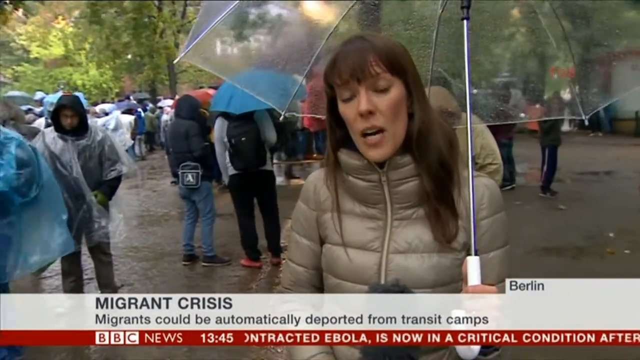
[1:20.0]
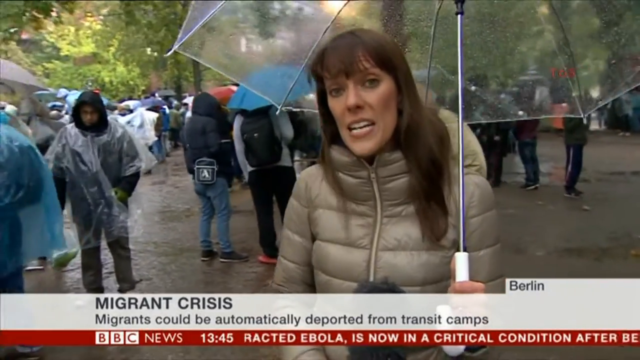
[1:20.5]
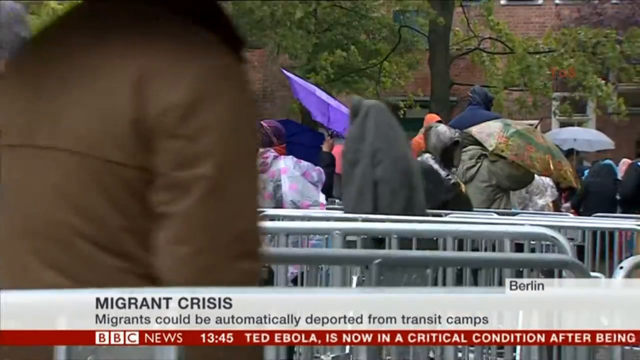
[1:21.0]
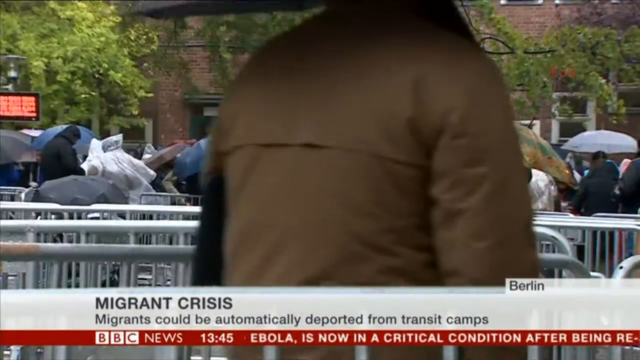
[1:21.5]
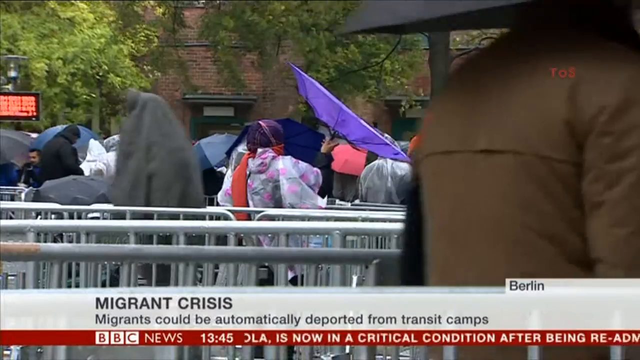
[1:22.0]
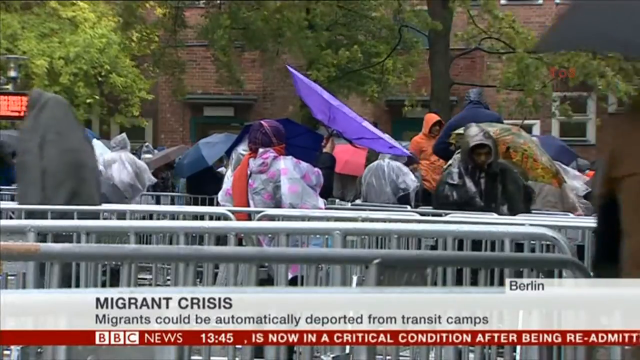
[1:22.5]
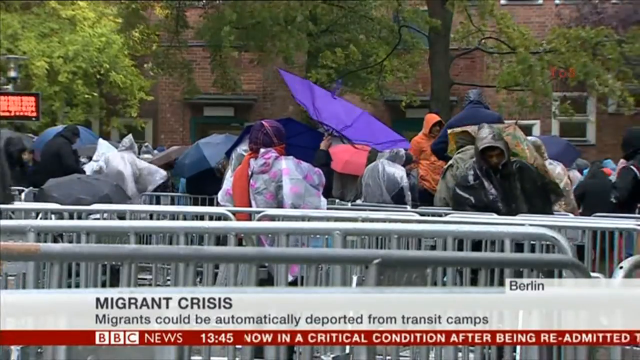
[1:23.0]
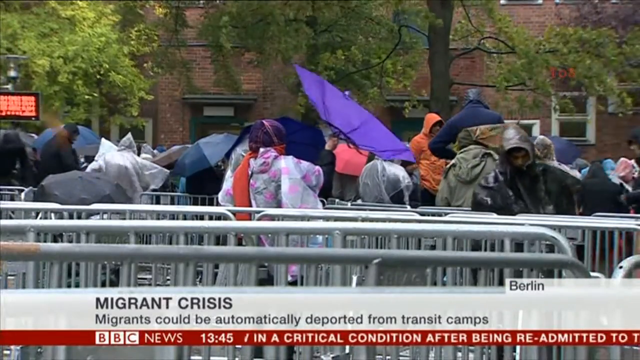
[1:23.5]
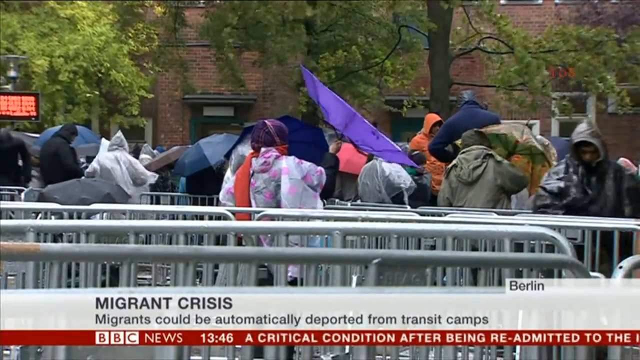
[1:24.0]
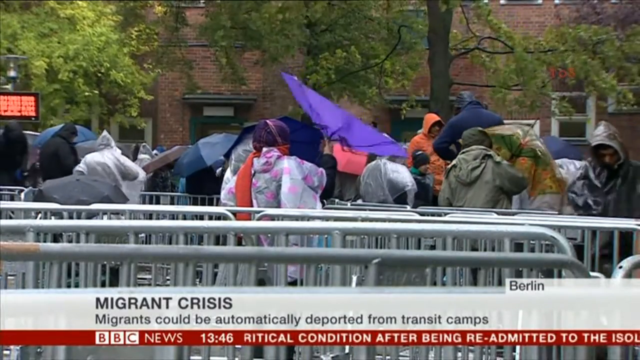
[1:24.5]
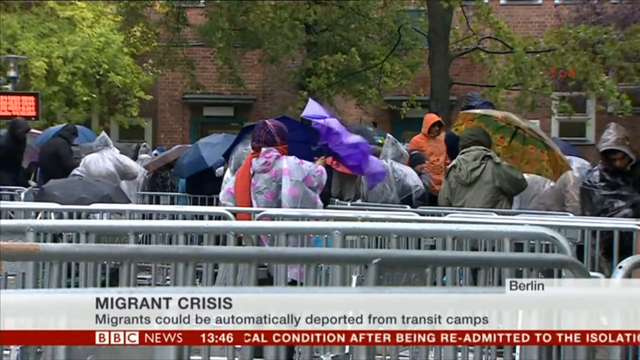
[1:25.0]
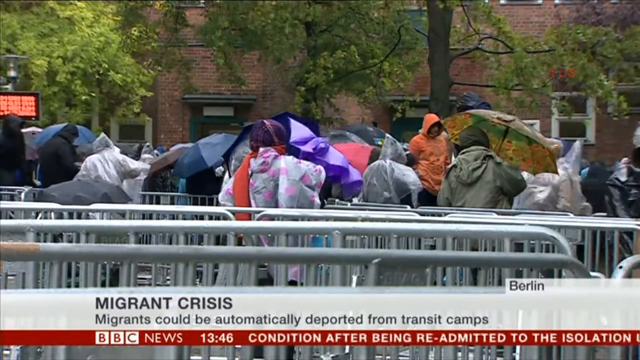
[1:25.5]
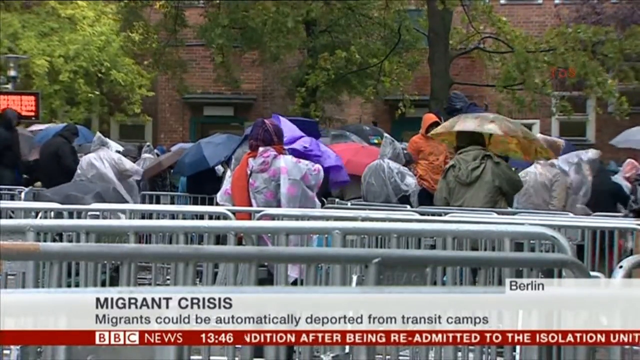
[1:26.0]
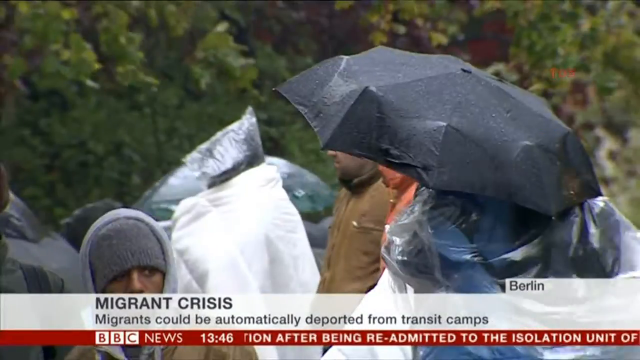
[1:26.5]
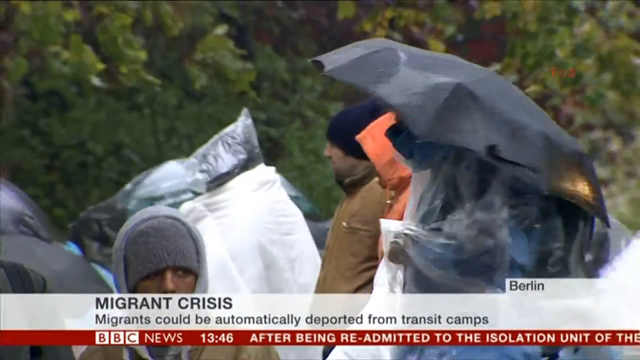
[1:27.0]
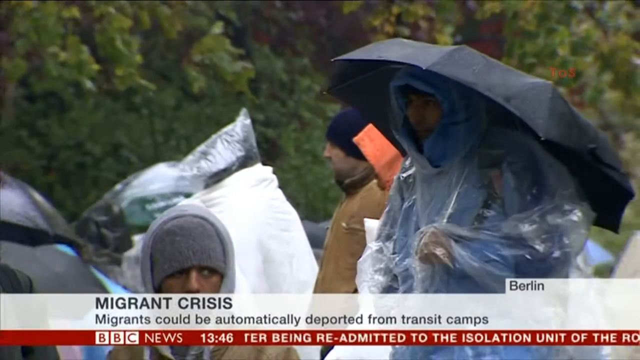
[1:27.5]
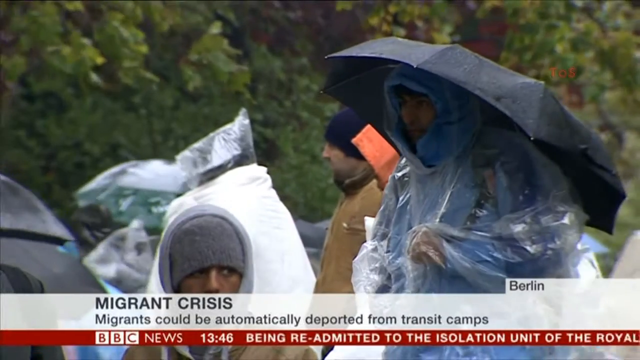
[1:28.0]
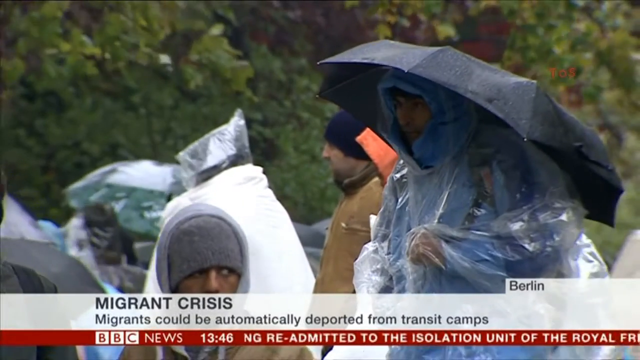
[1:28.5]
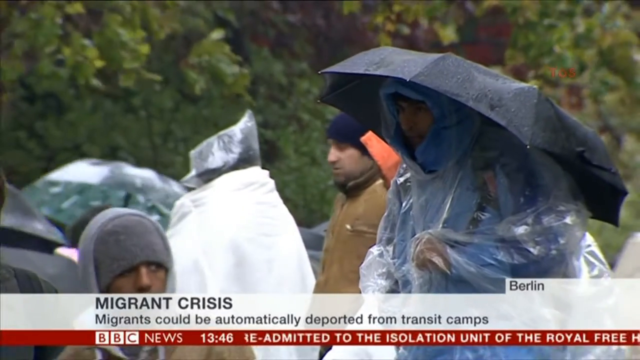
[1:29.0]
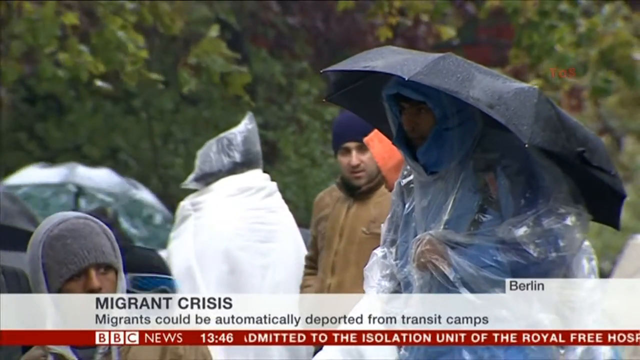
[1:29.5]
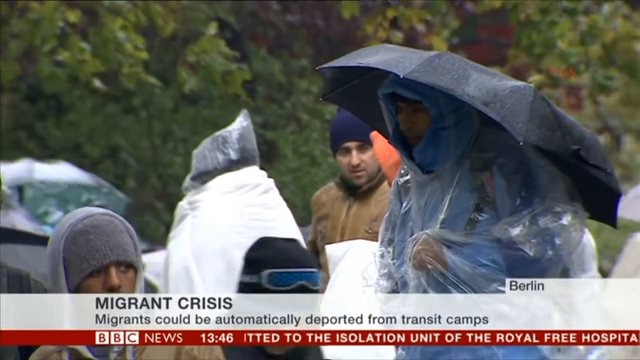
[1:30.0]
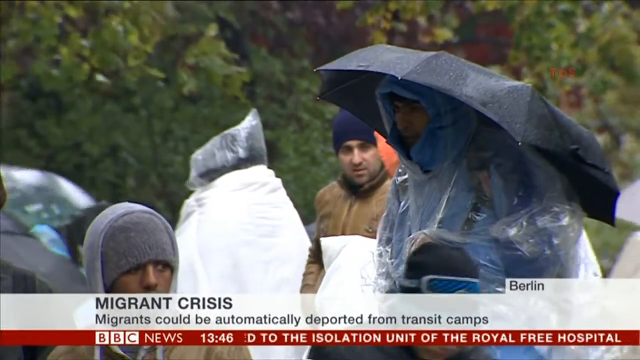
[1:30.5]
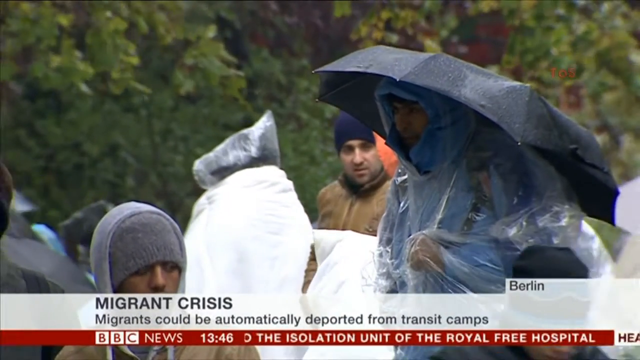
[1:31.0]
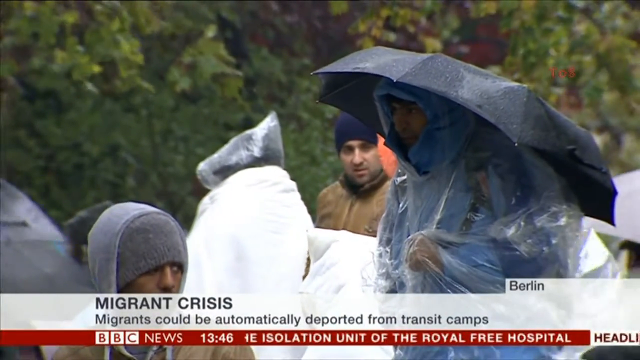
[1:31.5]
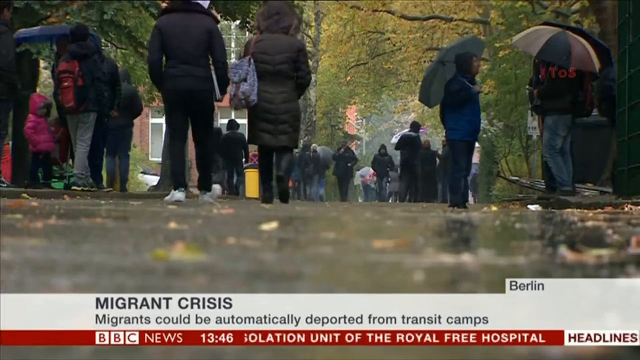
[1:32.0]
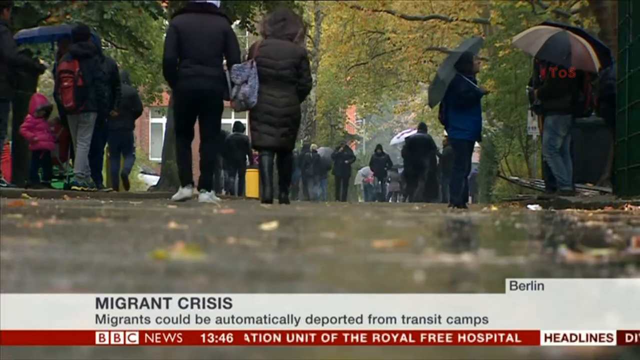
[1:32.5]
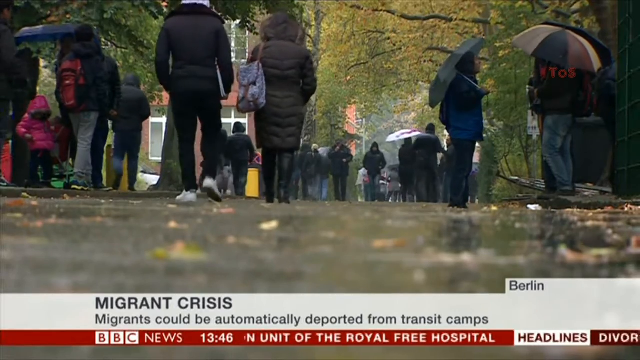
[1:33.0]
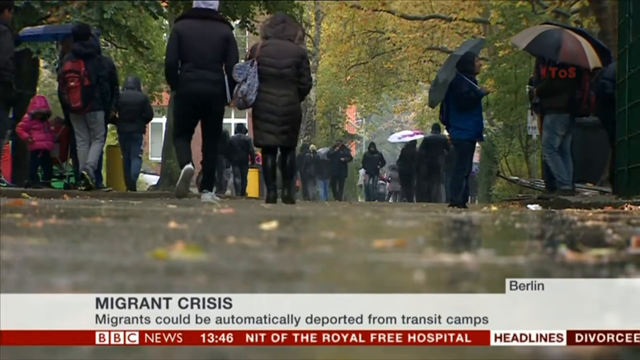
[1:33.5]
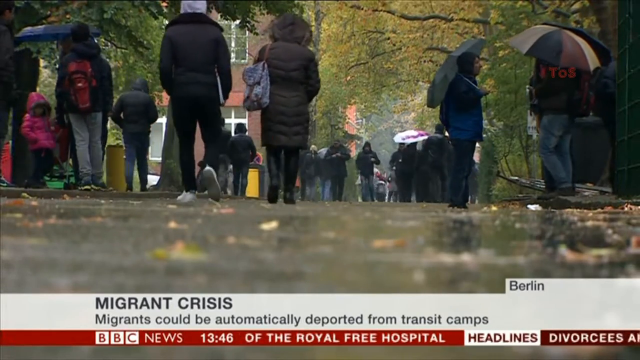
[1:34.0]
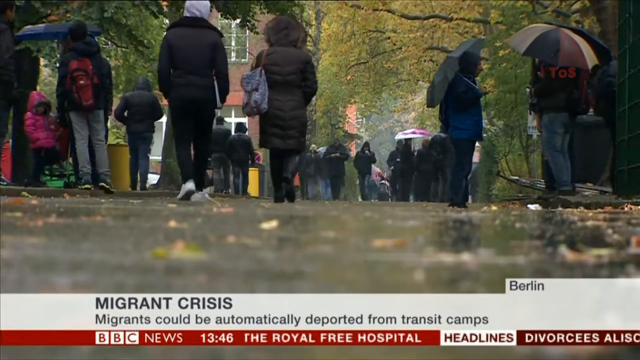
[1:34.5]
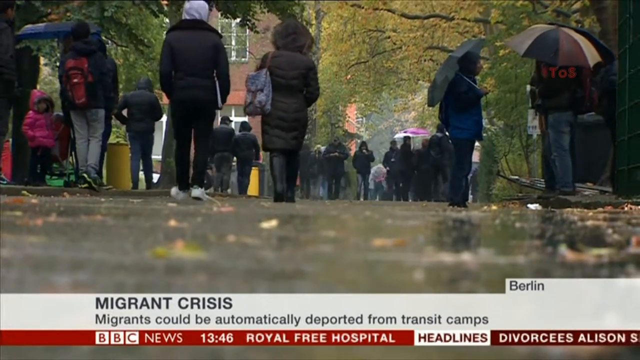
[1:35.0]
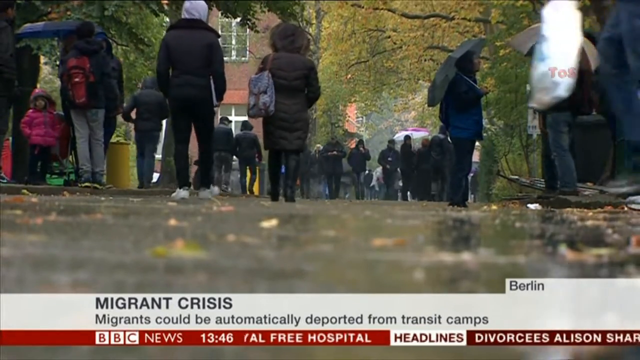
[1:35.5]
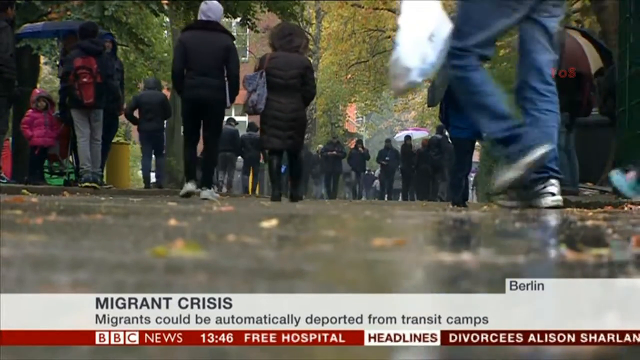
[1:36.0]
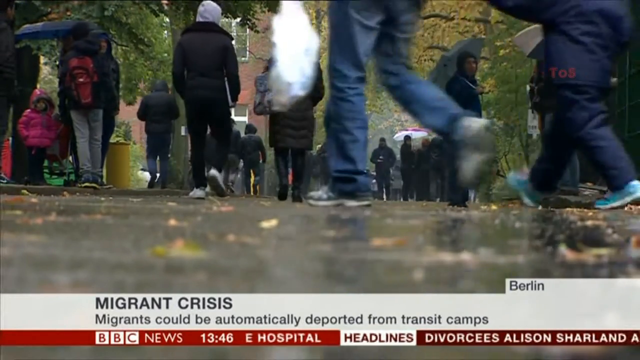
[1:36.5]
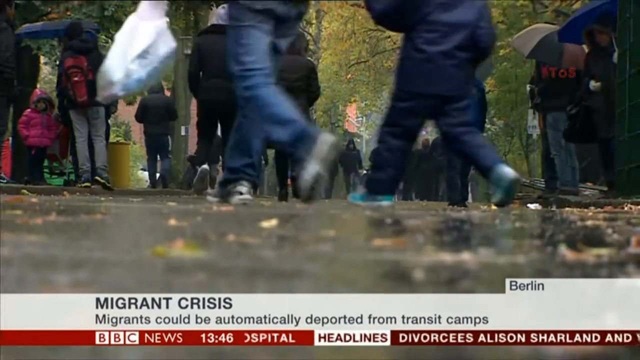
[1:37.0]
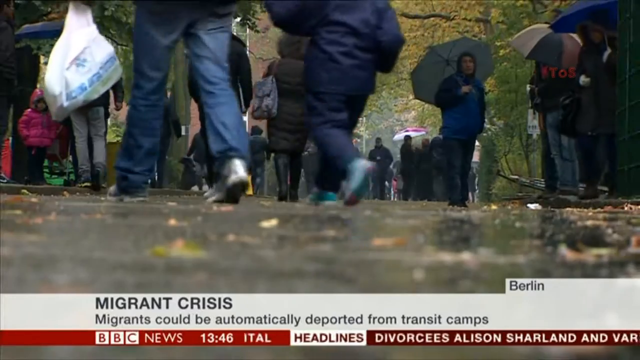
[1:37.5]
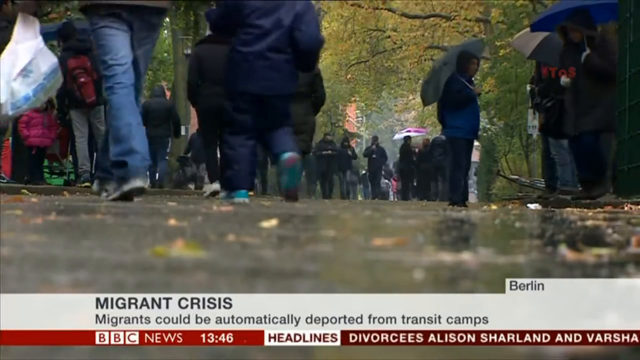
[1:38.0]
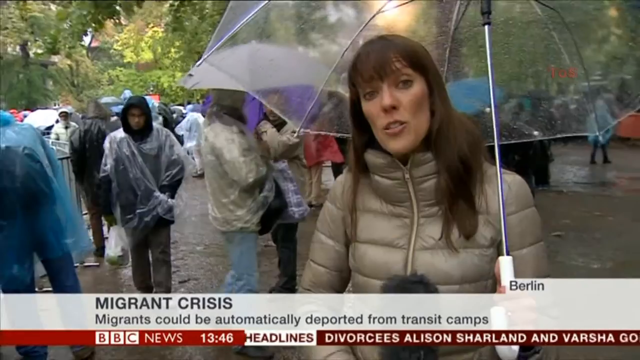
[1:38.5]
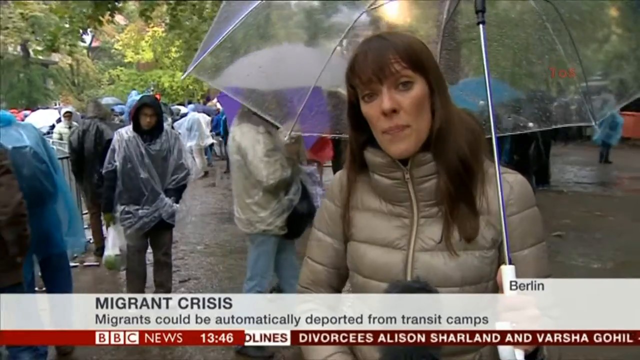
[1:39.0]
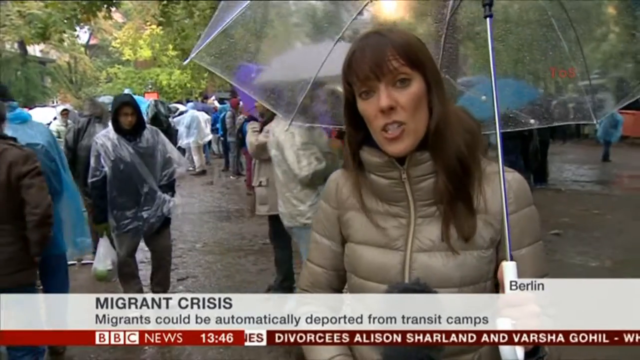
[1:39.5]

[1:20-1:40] The reporter stands outside in the rain, talking. The camera then pans to dividers: metal gates set in rows and divided into sections to let people go through in an orderly fashion. A group of people, apparently at the end of one section of the gates, have umbrellas up. The wind blows a little, not heavily, rustling the leaves and moving some people's raincoats. The camera then seems to be almost on the ground as people pass by, catching more of their feet and people walking in the distance. Down below, information apparently about news in the area continues, and the migrant crisis text reads "migrants could be automatically deported from transit camps".